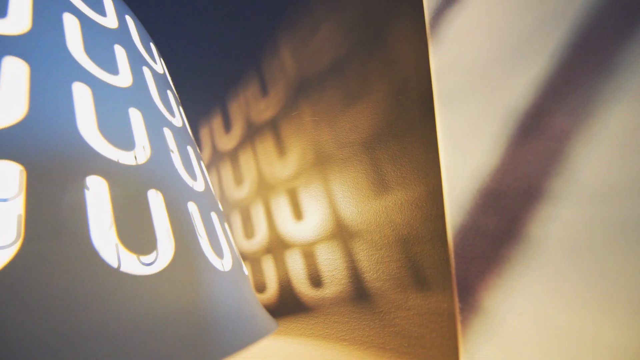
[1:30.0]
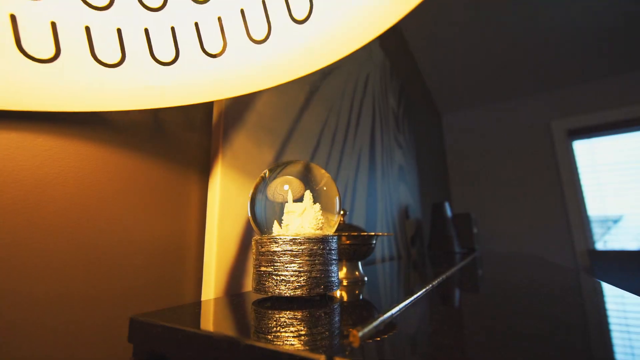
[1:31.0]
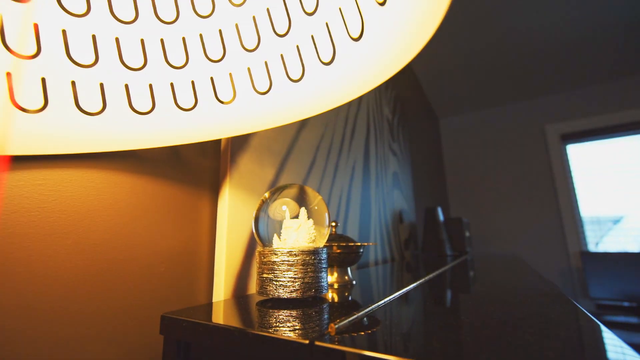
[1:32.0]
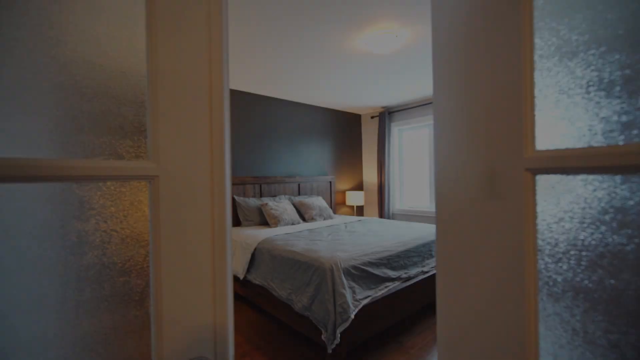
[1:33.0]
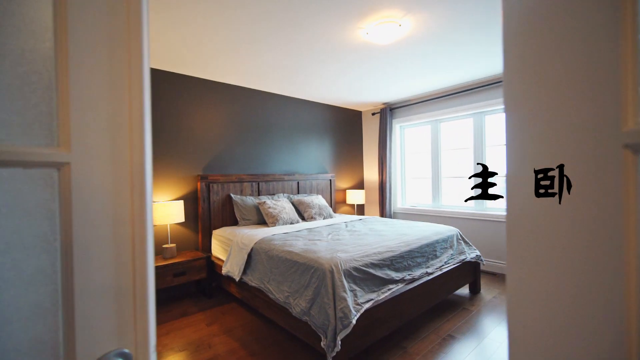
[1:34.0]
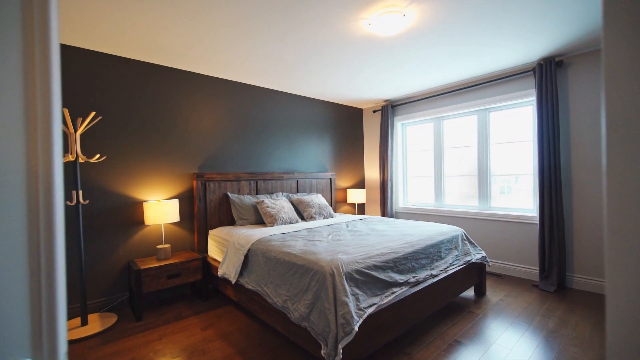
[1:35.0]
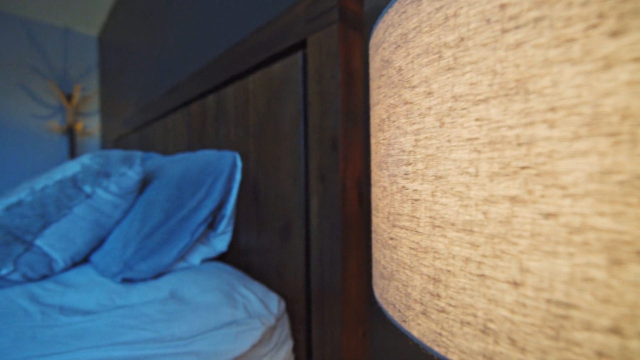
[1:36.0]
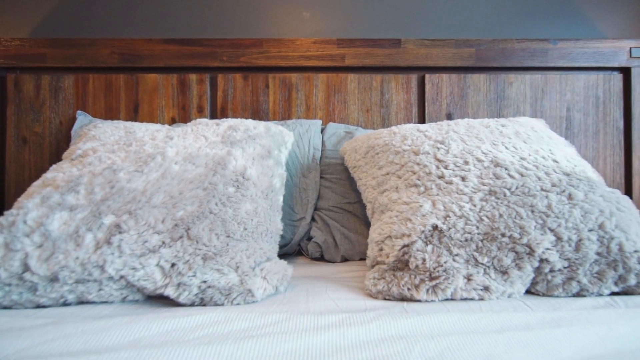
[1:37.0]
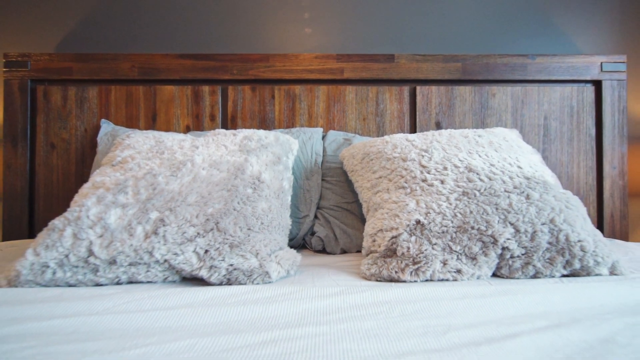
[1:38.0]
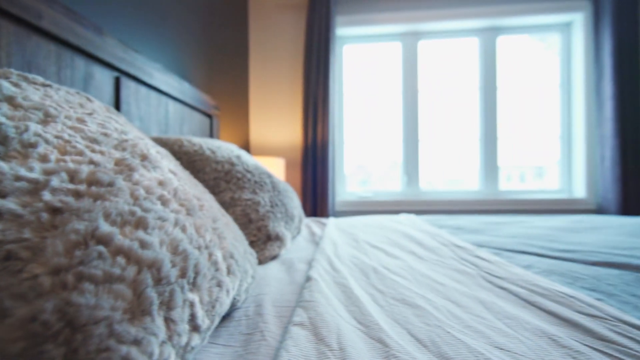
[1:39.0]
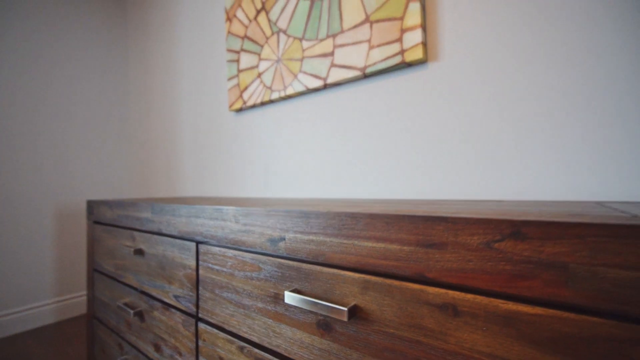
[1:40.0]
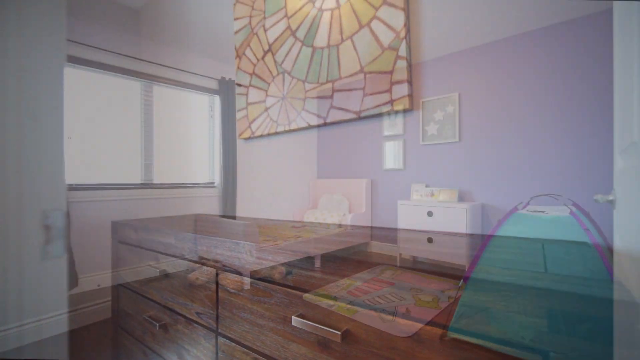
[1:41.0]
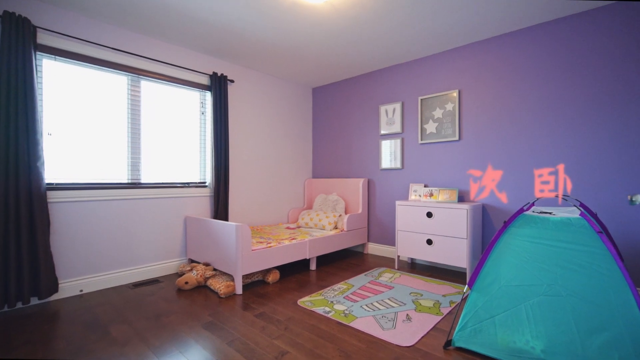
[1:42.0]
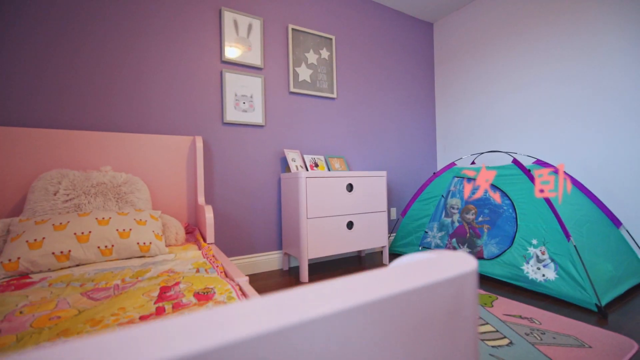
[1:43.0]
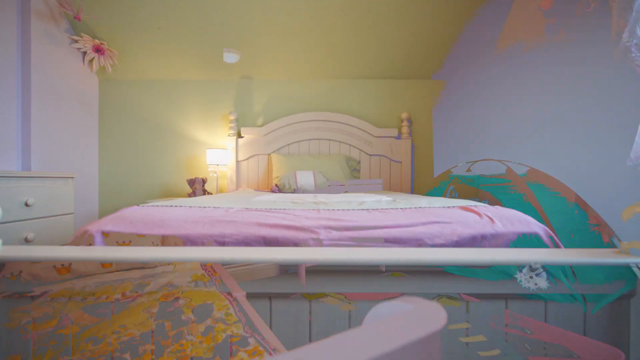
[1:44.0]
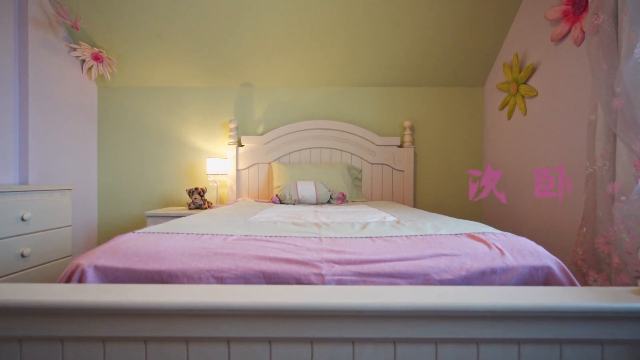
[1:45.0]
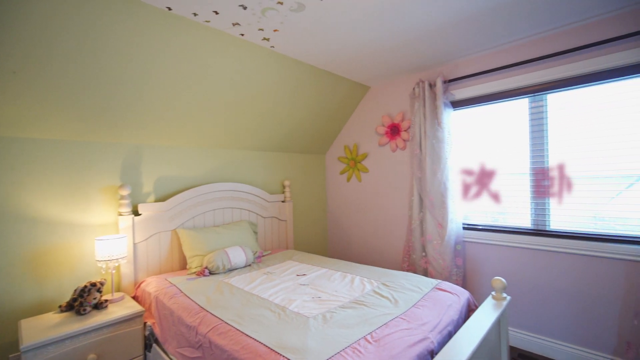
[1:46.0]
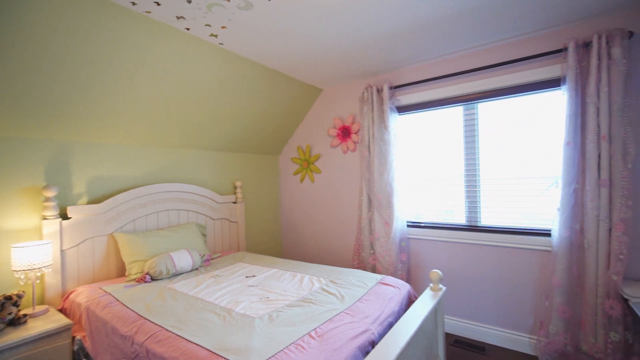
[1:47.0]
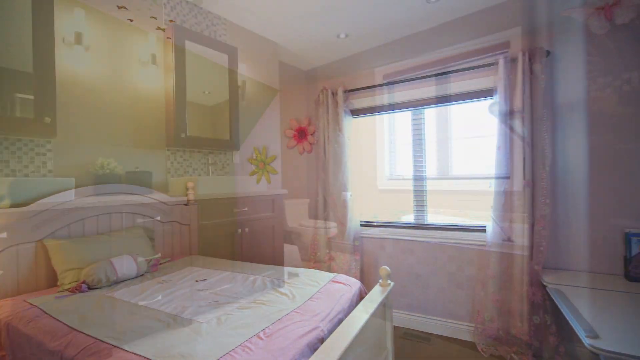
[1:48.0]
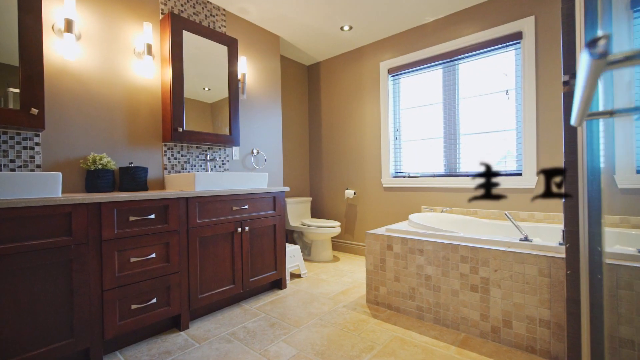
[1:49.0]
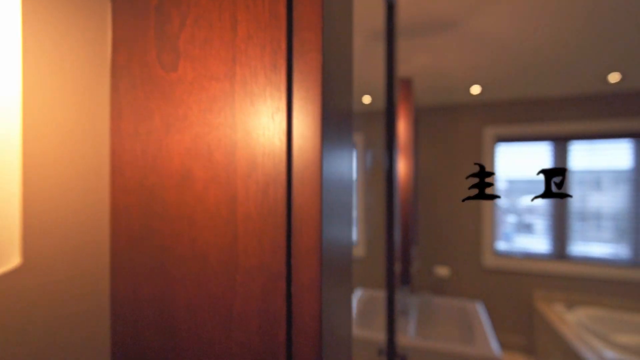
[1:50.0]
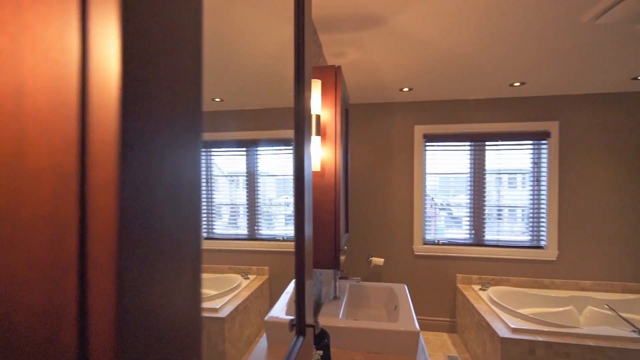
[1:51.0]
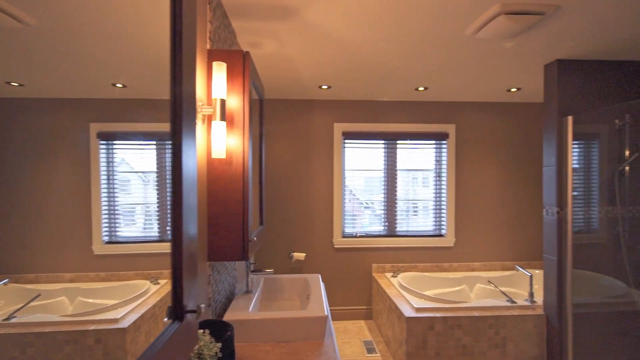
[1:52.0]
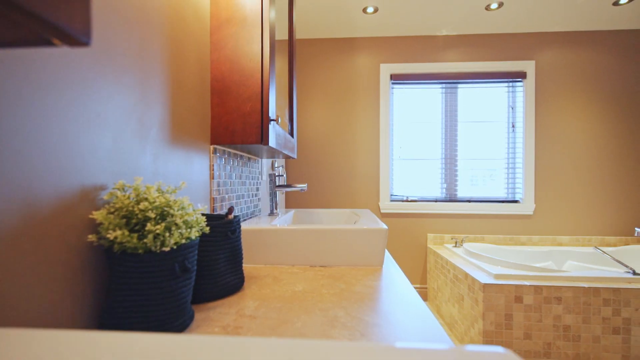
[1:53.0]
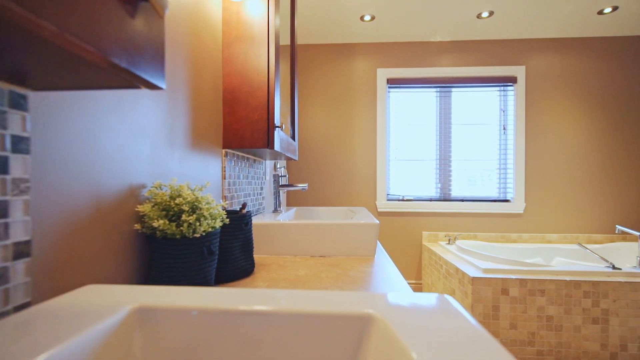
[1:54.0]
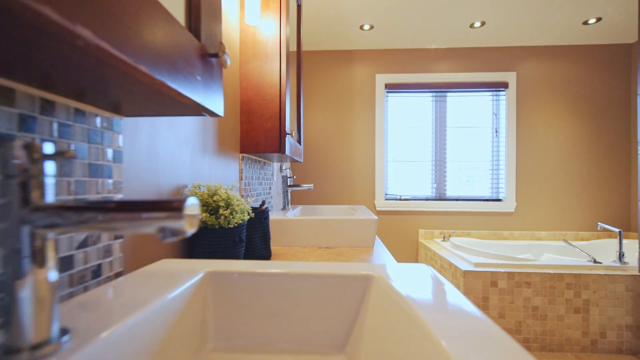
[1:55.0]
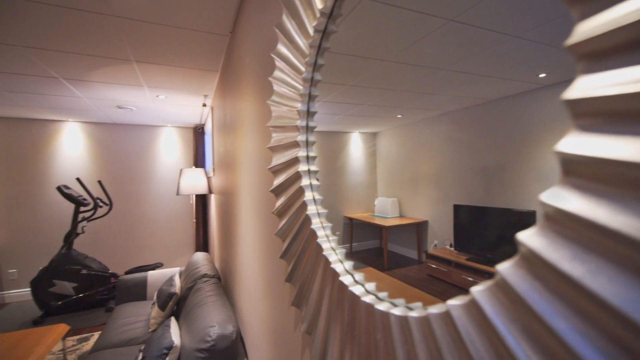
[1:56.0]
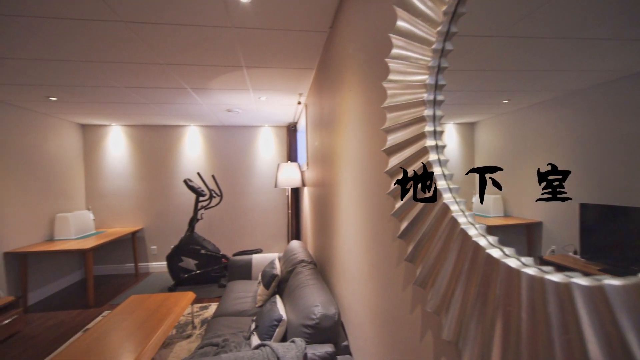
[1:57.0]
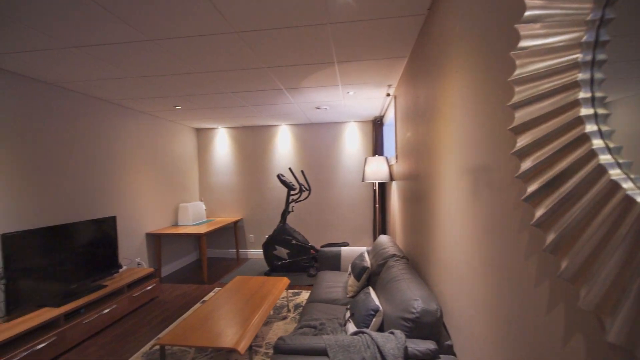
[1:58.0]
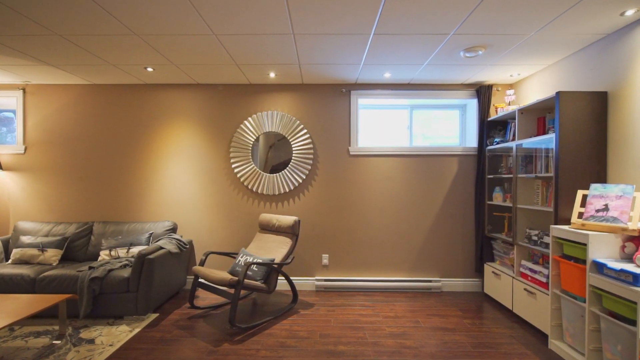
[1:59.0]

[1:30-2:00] A bedroom opens the scene, with a gray bed sheet, apparently three pillows, a brown headboard behind the bed, an end table with a lamp on each side of the bed, a black back wall, a white ceiling, and a window on the right-hand side. The camera angle changes quickly twice, showing the sheets and pillows of the bed from different angles; in the back there appears to be a brown wooden dresser with a wall art canvas above it depicting a bunch of fragmented shapes. Another kid's room is shown, with a purple wall in the background, a small pink bed on the left, a nightstand table to the right of it, and a window to the left of the room. To the right is a small tent with the Disney's Frozen logo on it. Another children's room follows, with an olive green back wall, an open window to the right, pink curtains and a fairly small bed, as the camera rotates to the right. Then the bathroom is shown: the cabinets, the window and the bathtub, from various angles slowly. The camera is always moving, and near the end it looks like it shows the basement.